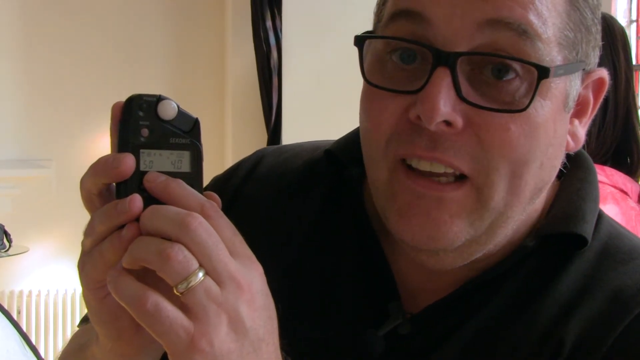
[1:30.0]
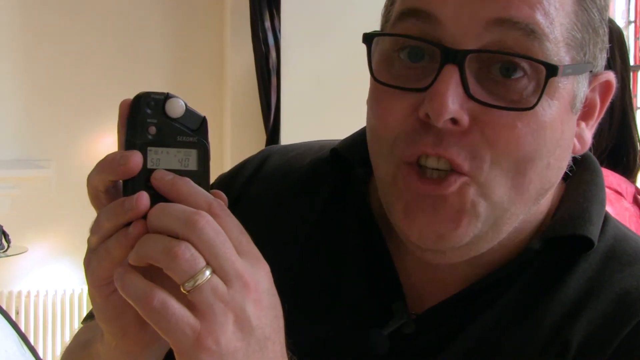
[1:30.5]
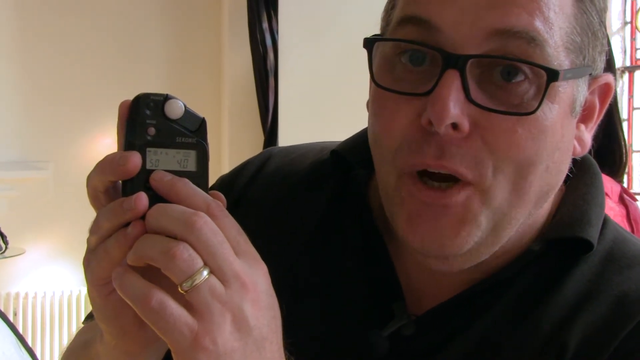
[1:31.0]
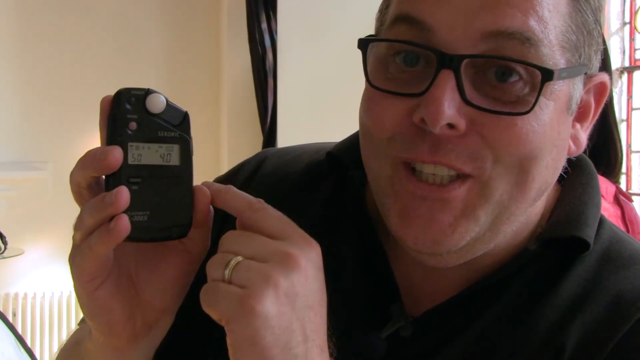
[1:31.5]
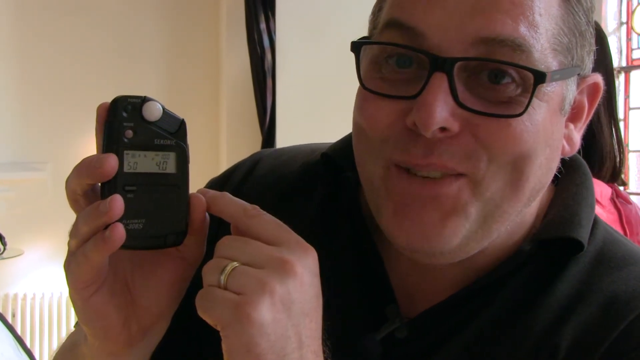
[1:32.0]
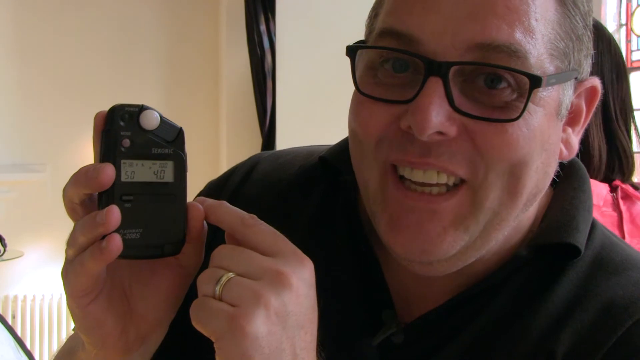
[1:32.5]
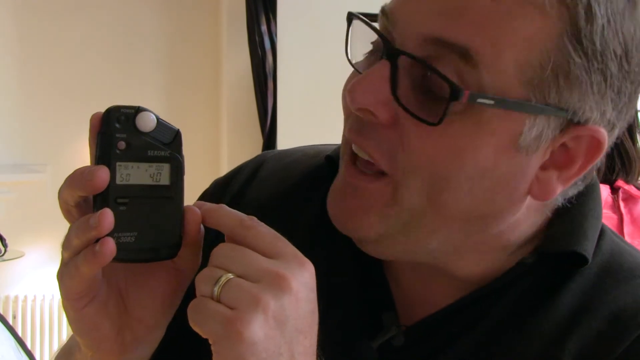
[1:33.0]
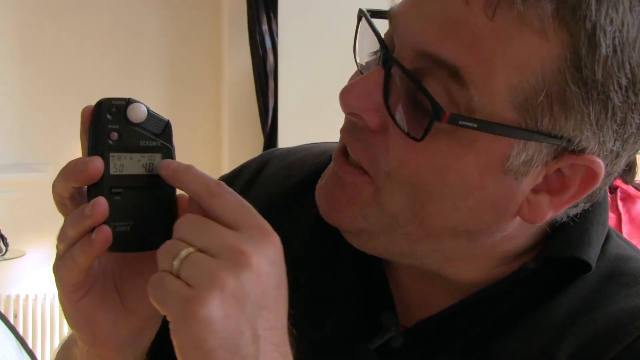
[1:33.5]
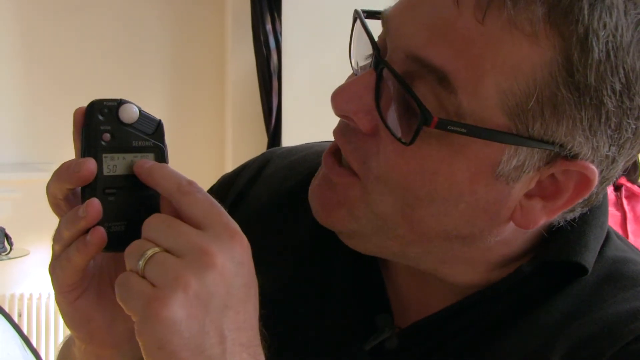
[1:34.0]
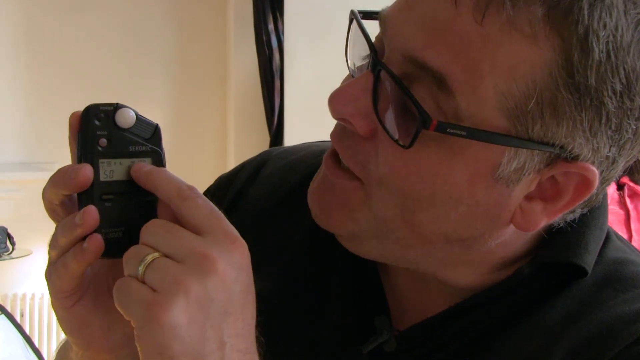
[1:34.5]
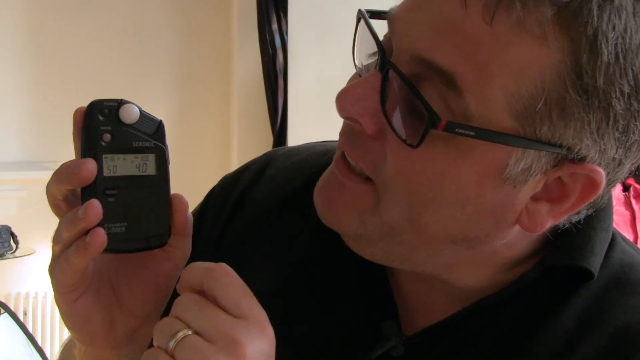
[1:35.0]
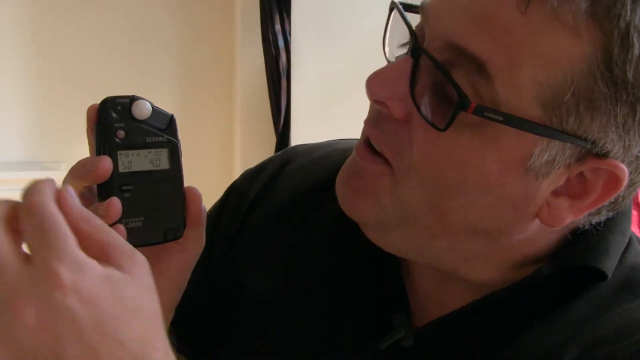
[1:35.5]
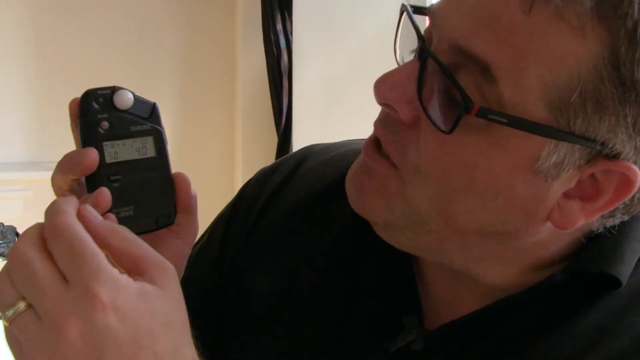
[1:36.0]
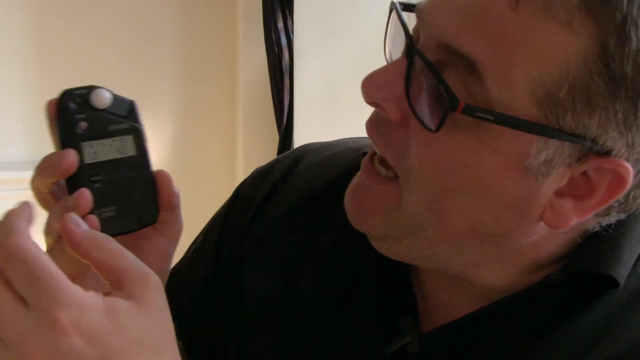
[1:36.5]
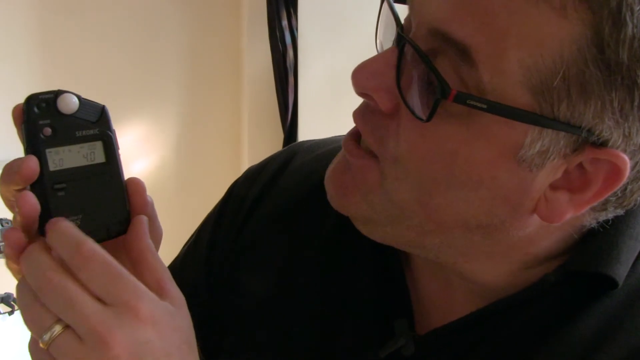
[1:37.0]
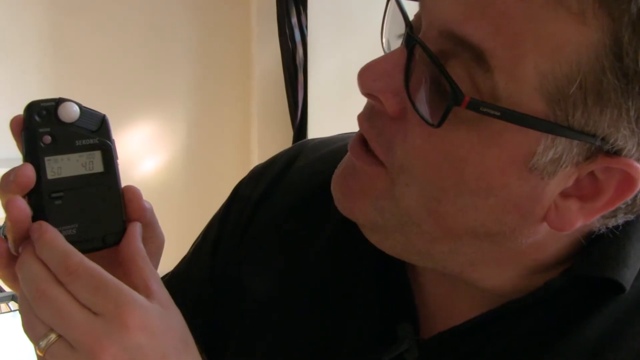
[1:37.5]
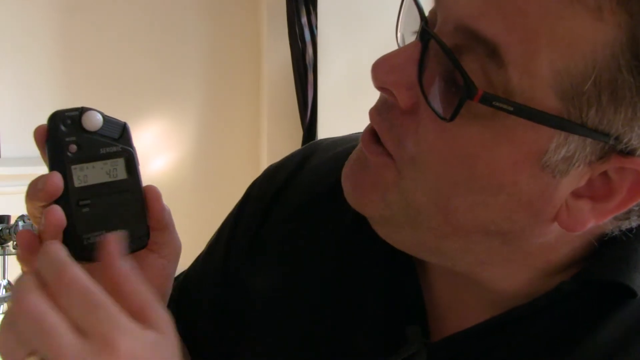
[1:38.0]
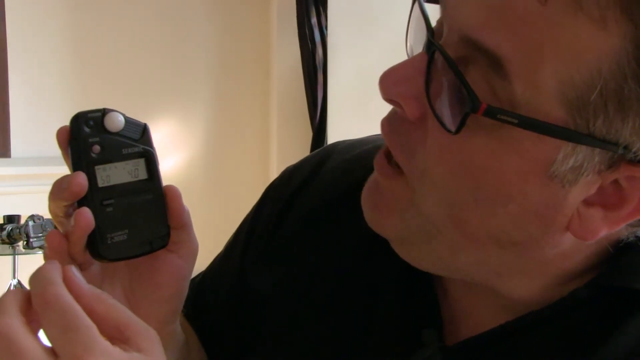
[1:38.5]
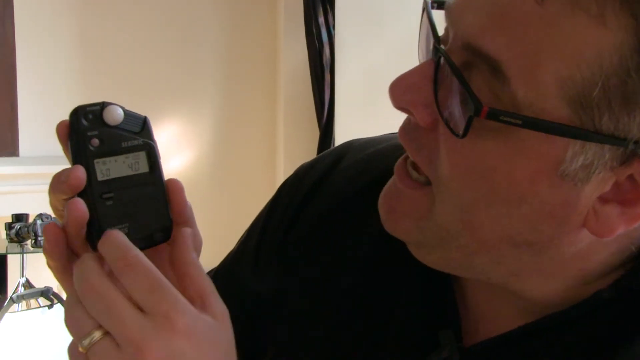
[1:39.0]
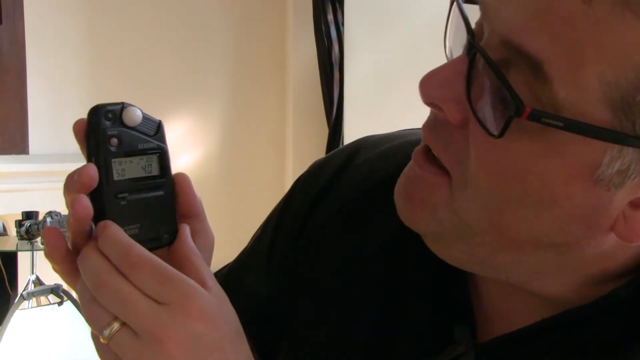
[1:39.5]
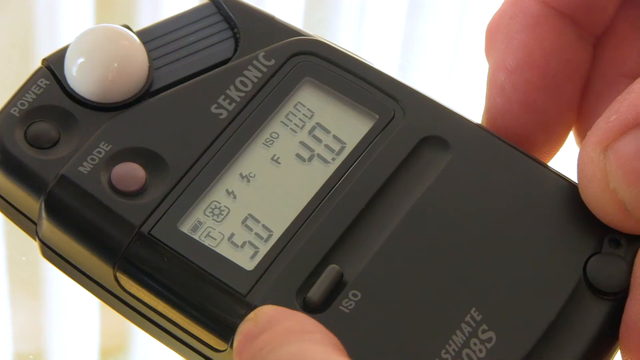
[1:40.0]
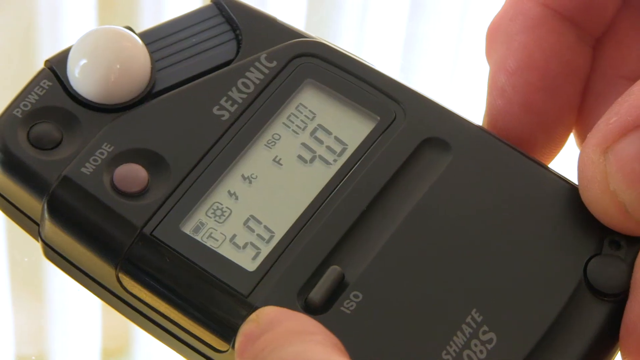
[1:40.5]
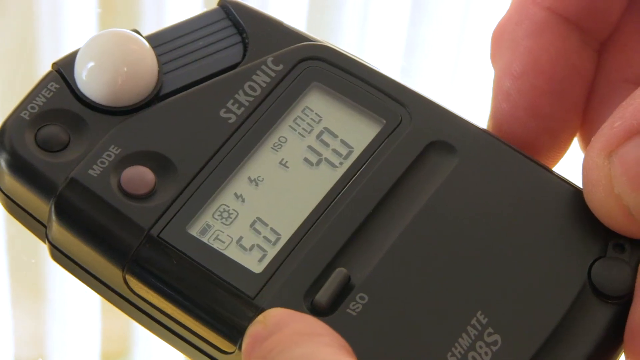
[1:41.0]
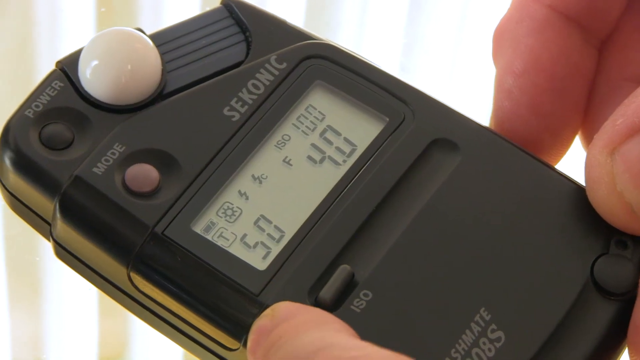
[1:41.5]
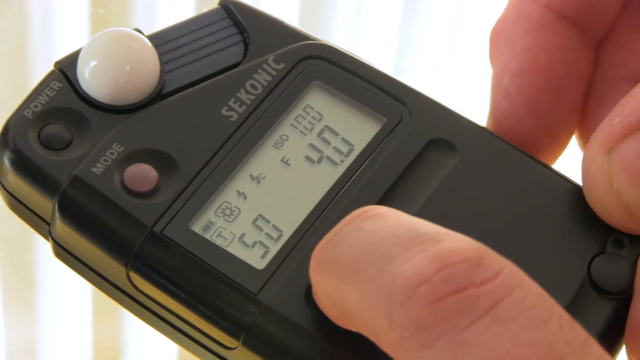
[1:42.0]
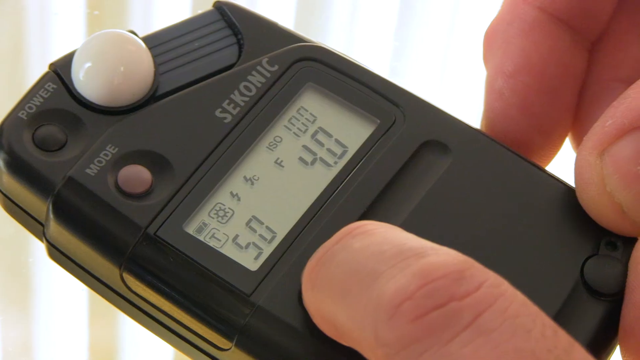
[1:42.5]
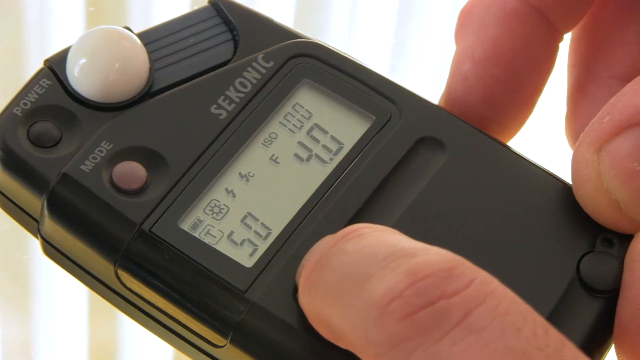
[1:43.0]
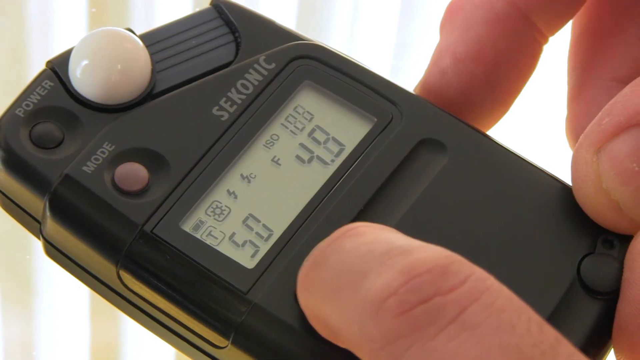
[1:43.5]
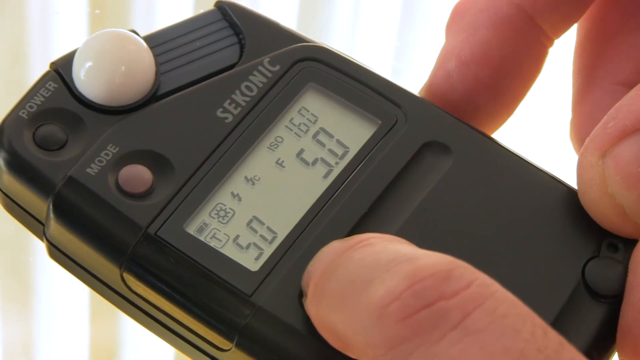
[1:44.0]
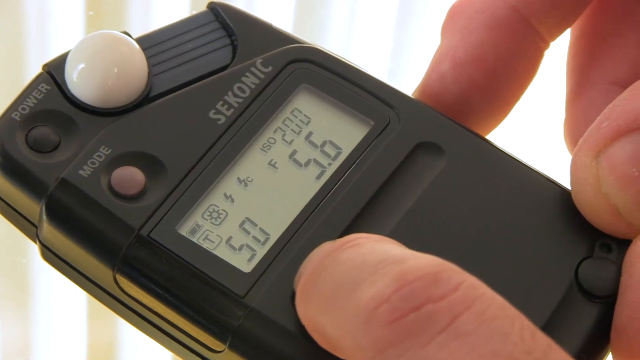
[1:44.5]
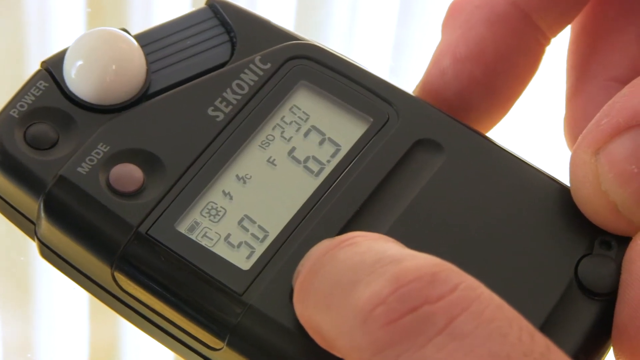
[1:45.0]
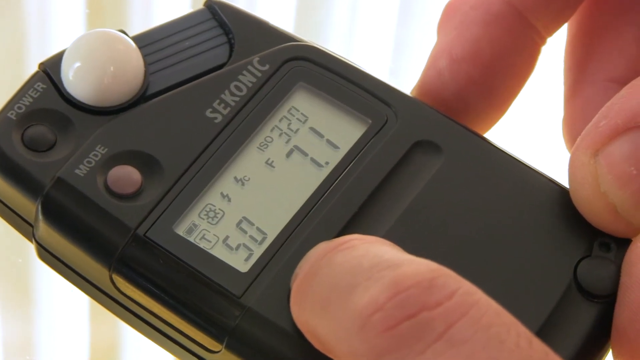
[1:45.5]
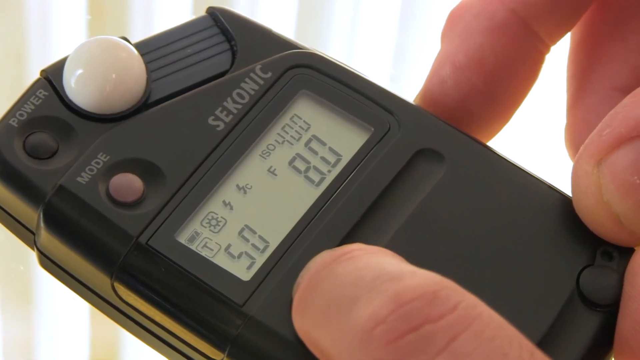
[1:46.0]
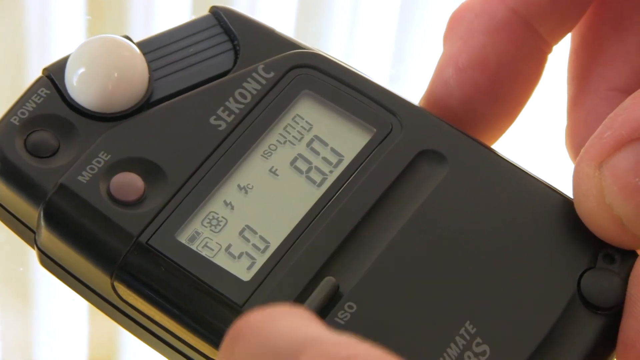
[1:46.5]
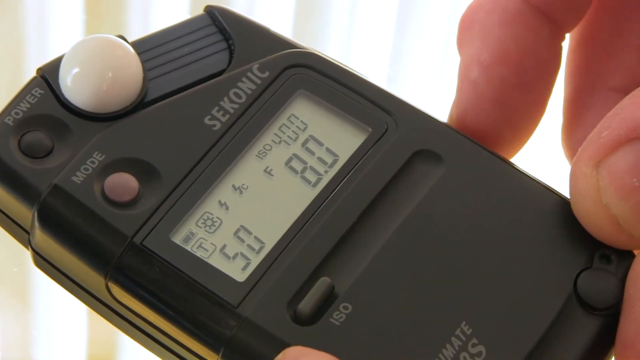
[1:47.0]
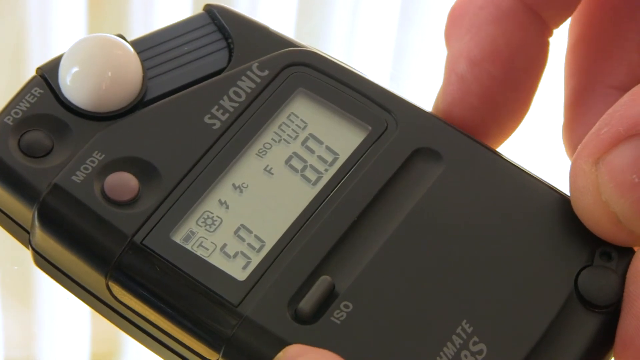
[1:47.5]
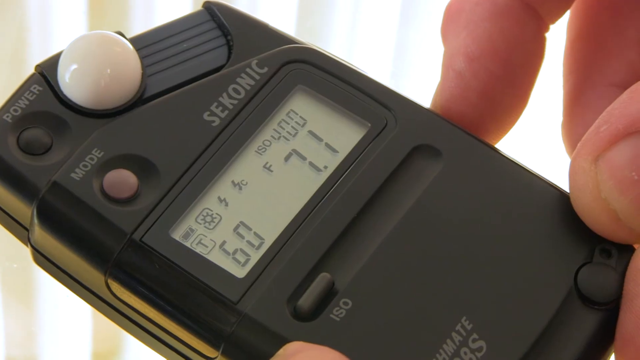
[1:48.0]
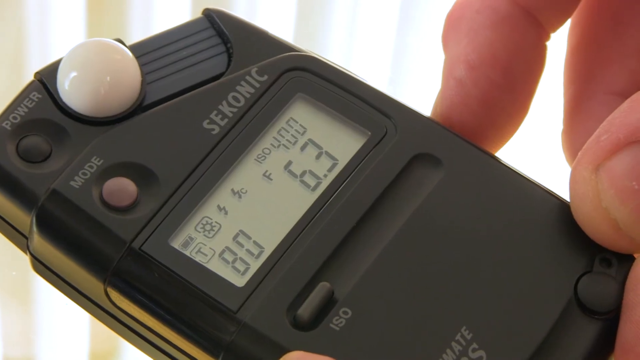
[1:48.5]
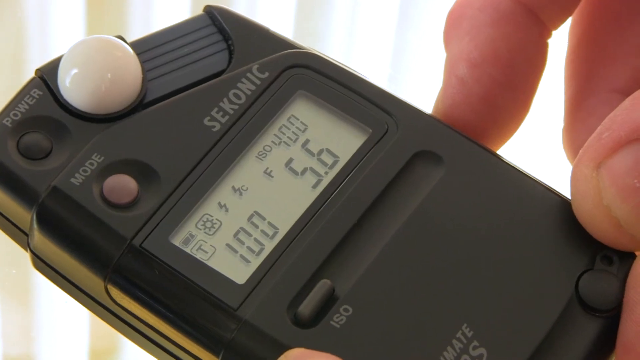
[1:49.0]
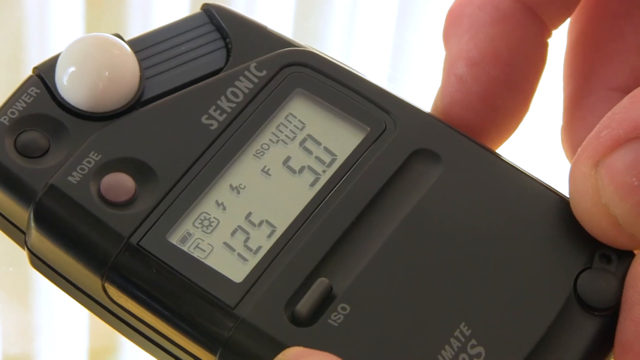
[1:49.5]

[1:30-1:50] The man still holds the device in his hand, talking about the things on the screen. The view then changes to just the device in his hand; the stained-glass window and the woman in pink are no longer visible. He pushes a button on the right side of the device, though the button itself cannot be seen, and his finger moves as he presses it. The numbers on the screen change as he does so, going from four to four and a half to five and up from there; a few different numbers change, all increasing as he keeps pressing.